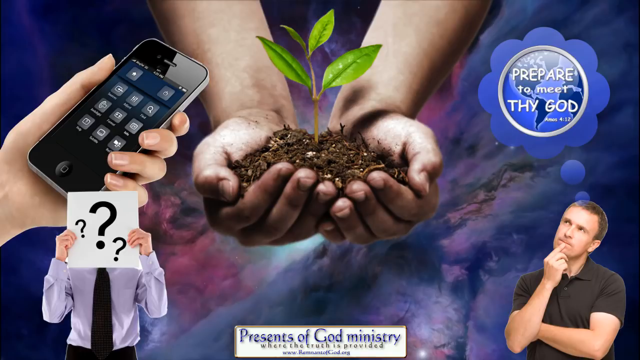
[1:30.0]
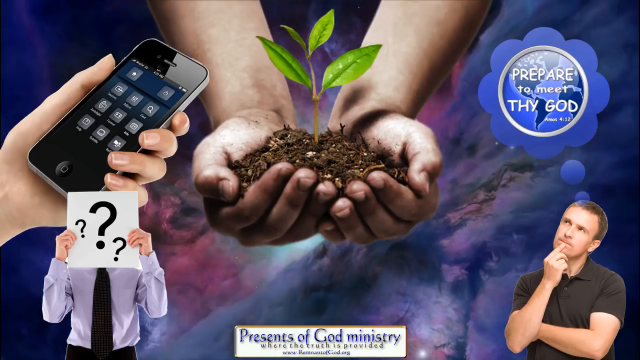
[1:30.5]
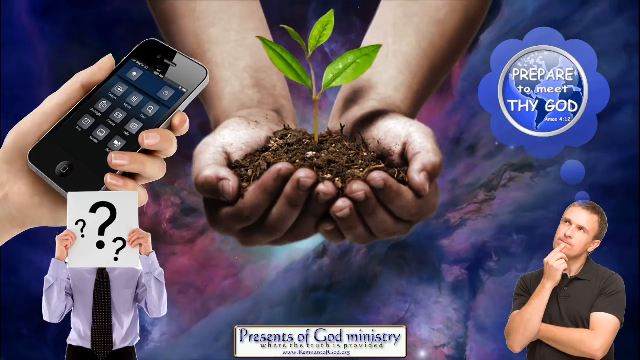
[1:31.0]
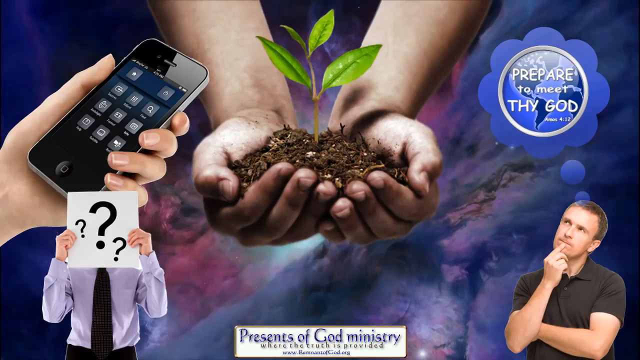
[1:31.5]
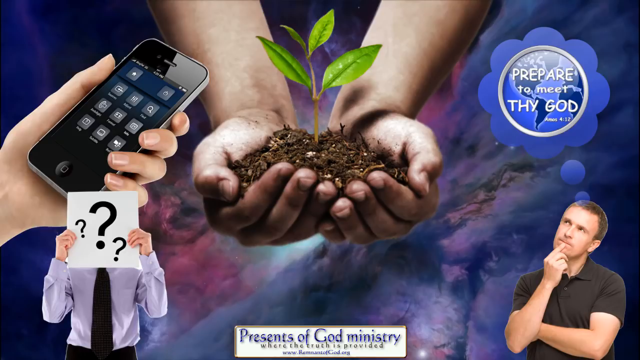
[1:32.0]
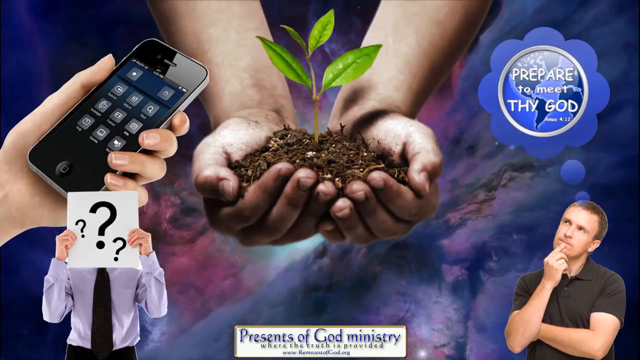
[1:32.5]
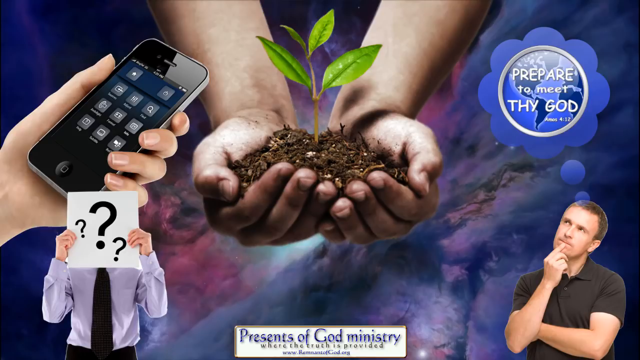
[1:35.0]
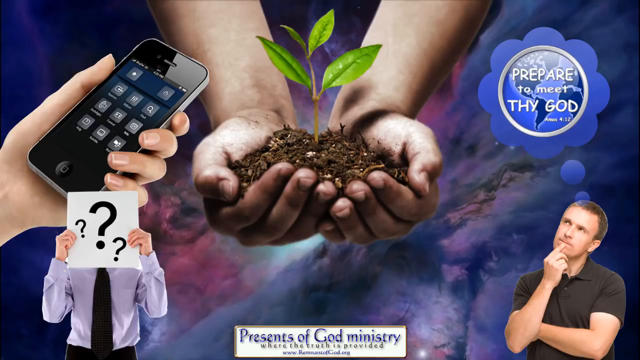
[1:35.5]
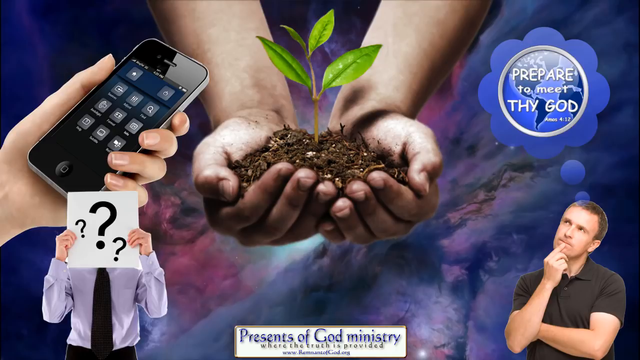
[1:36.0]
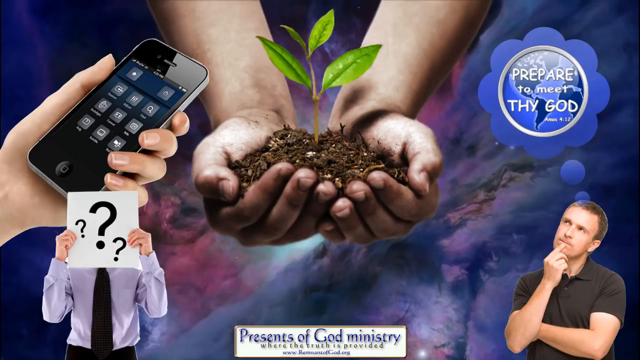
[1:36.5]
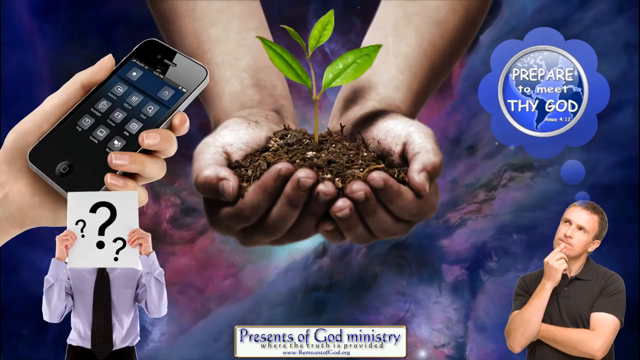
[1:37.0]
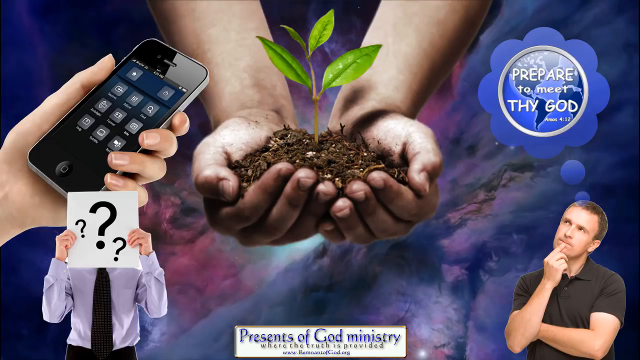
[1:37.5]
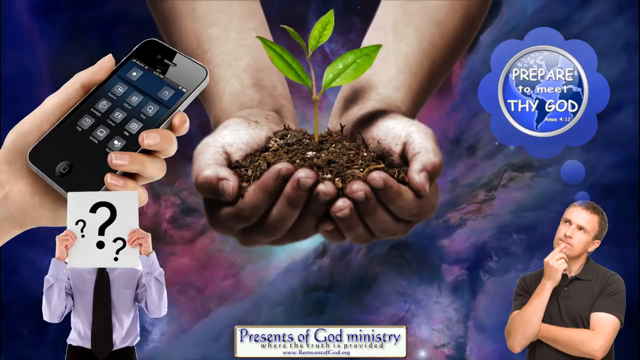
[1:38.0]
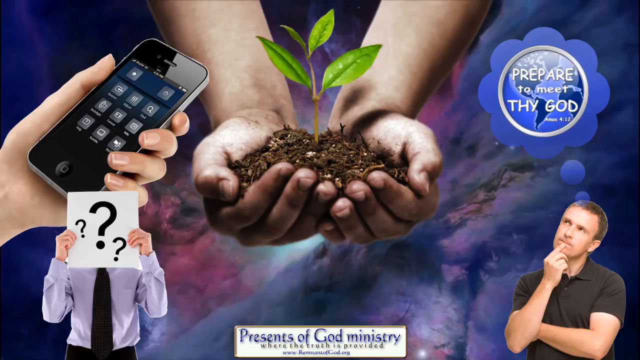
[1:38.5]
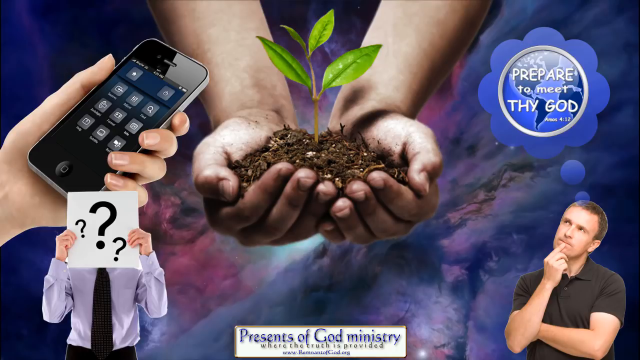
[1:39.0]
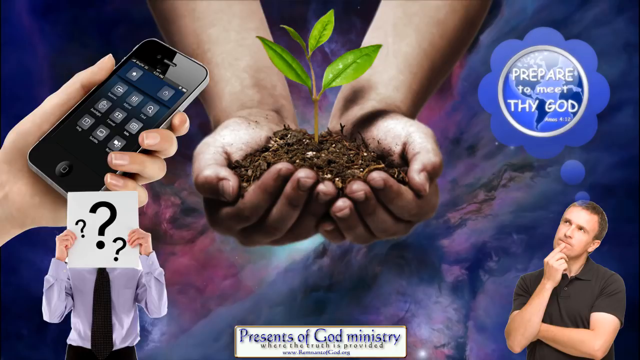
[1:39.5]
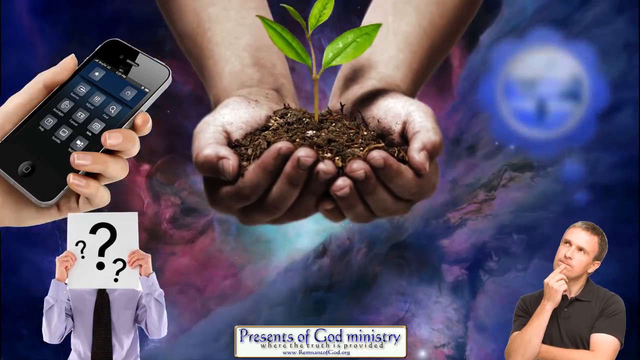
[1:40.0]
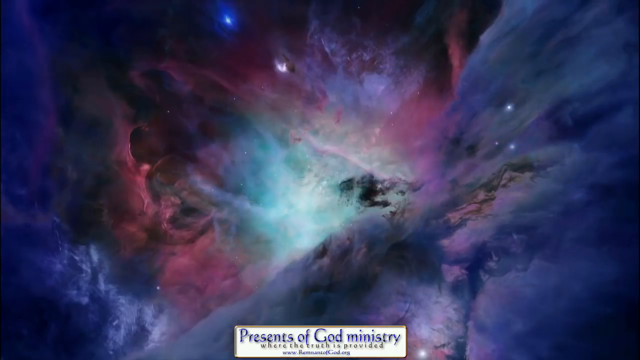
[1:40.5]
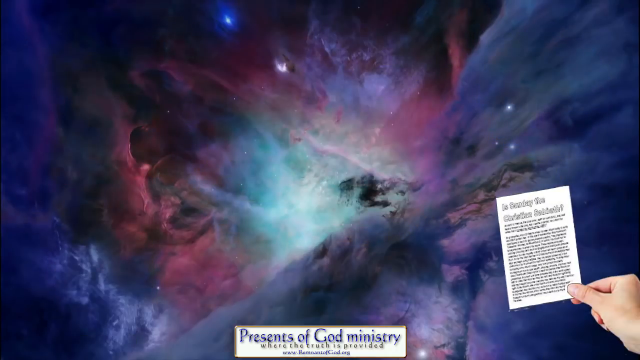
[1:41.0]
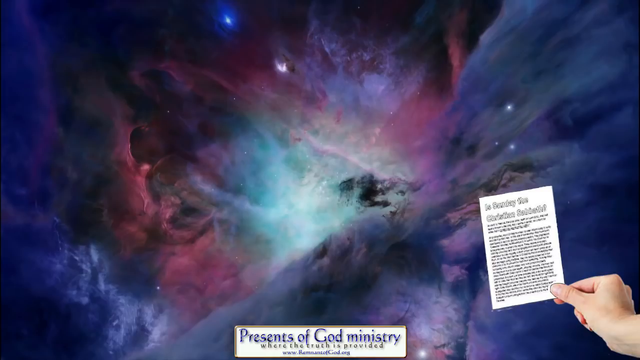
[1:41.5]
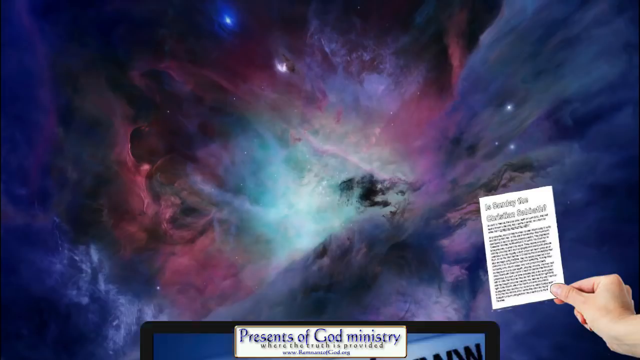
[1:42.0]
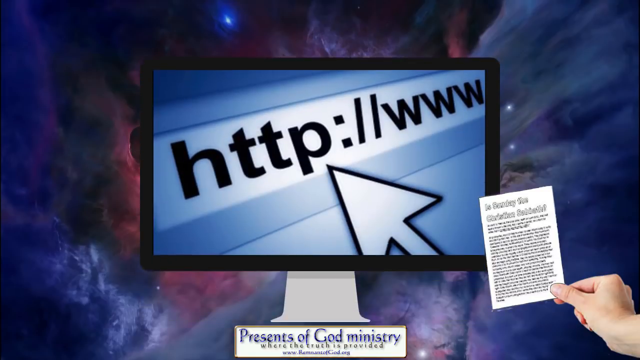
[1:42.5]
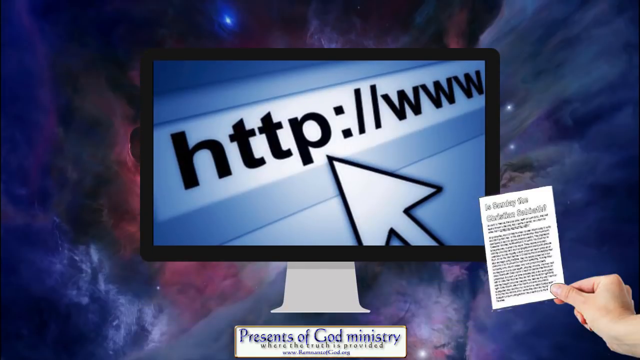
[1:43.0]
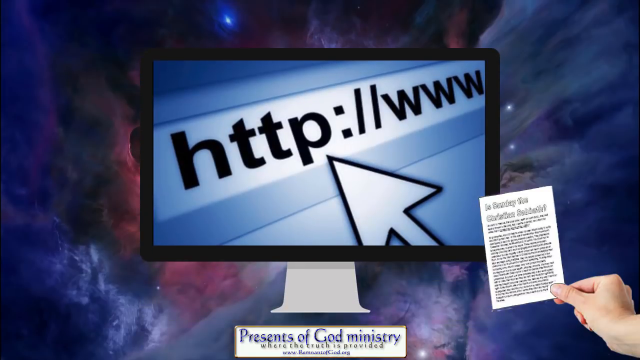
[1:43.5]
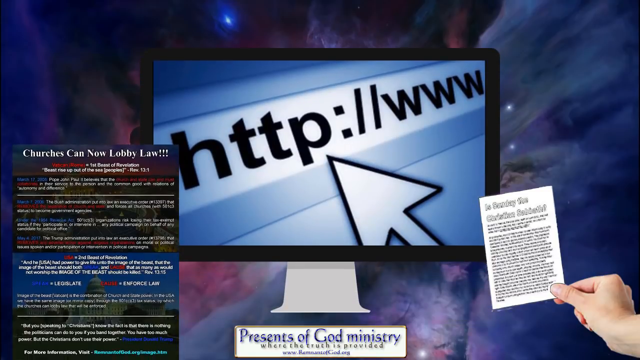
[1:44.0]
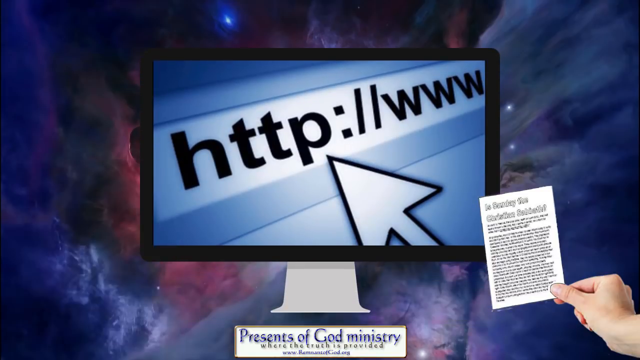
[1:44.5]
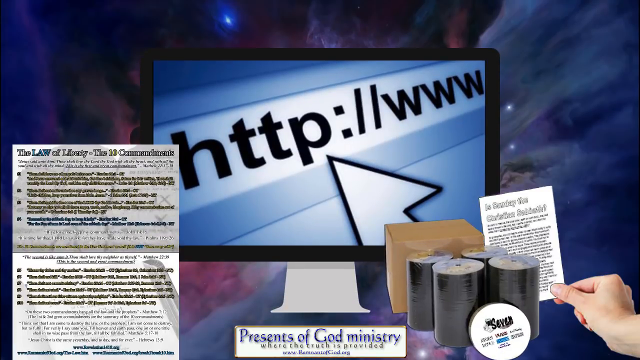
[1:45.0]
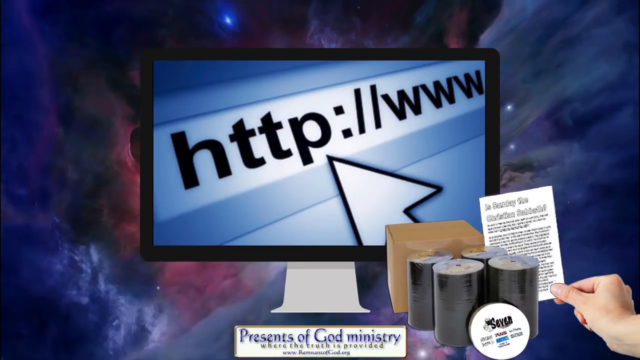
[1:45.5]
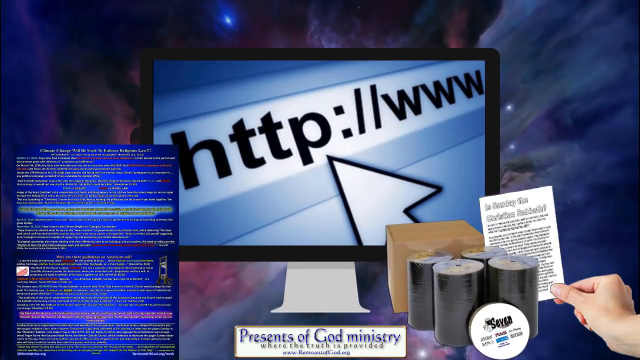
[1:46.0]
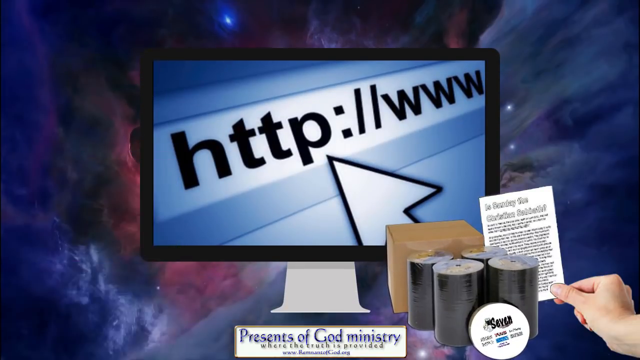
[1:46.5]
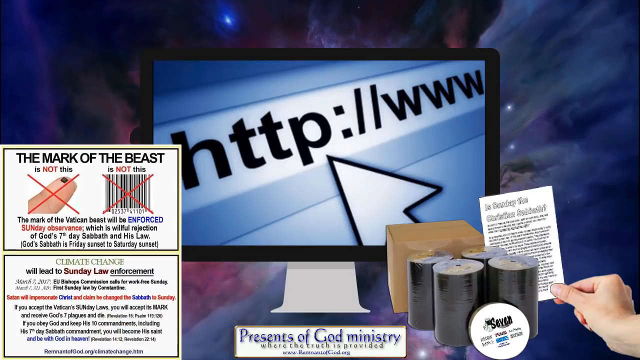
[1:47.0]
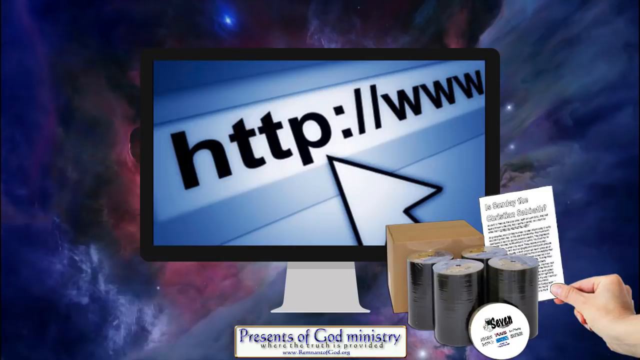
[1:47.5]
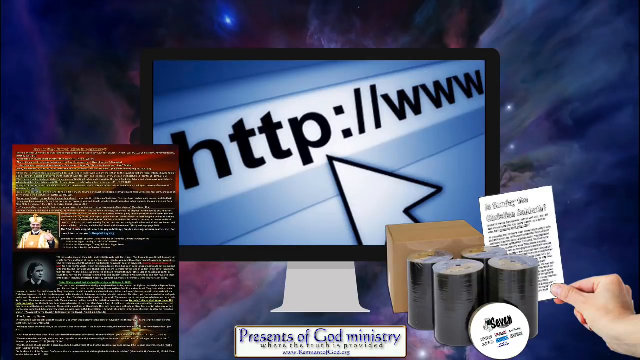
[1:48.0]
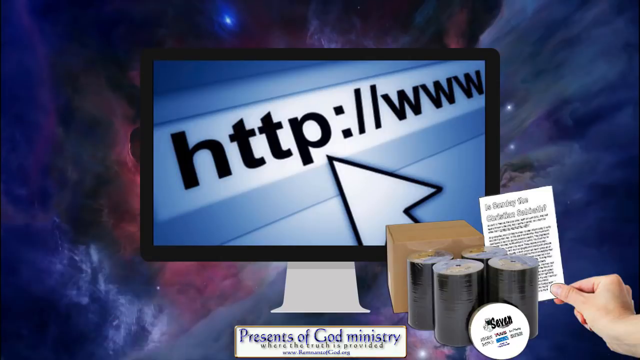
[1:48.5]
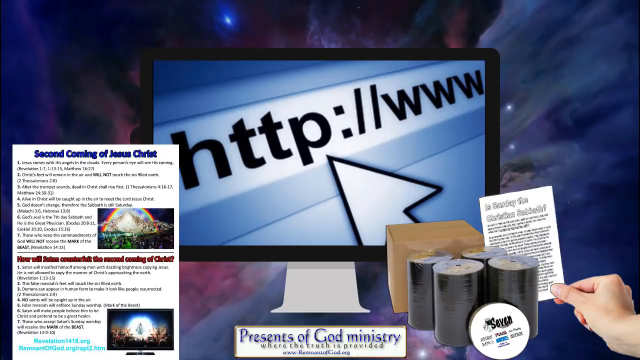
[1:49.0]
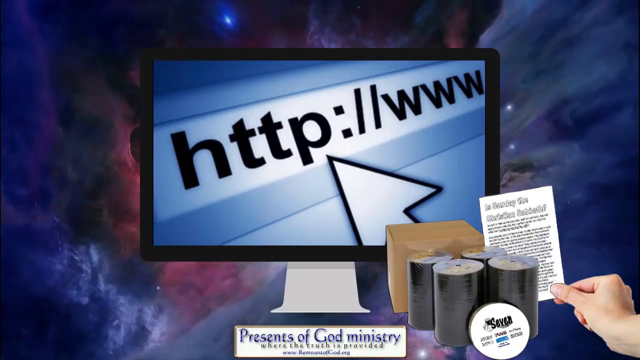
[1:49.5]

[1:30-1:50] The same scene continues with little change: the man in the lower right corner, the other man holding the sign, and the two hands holding the soil with the plant. About five seconds in, each of these items goes away, leaving just the space background. Out of the lower right corner comes a white right hand holding a piece of paper with some black text. A computer screen pops up in the center displaying "http://www", with an arrow pointing toward the "http". On the lower left, a series of pop-ups or computer articles appear, probably about five or six, popping up and going back down very quickly.